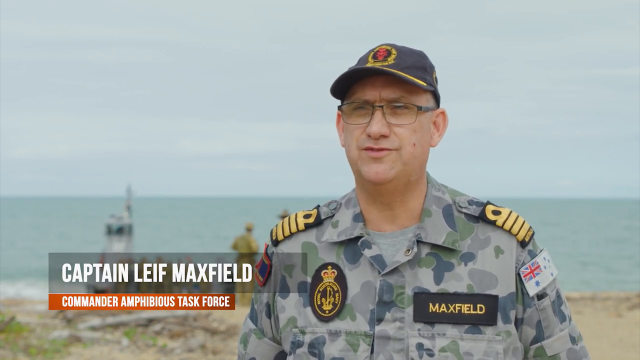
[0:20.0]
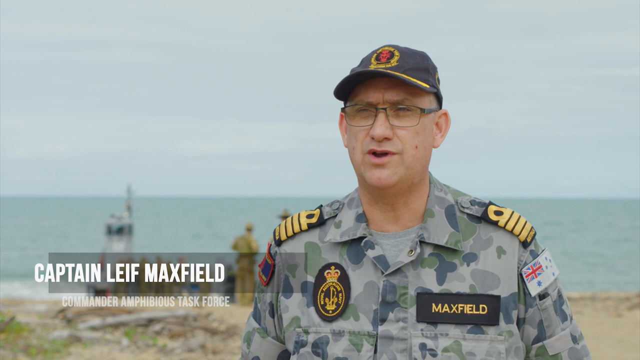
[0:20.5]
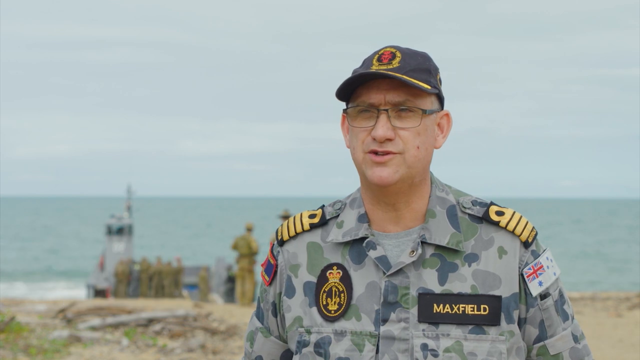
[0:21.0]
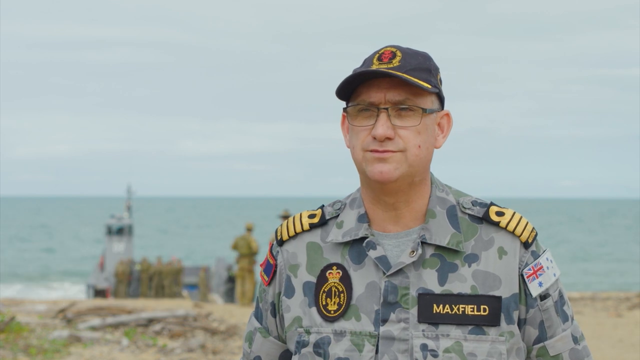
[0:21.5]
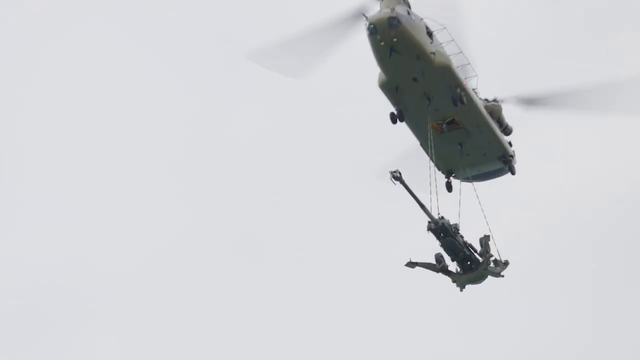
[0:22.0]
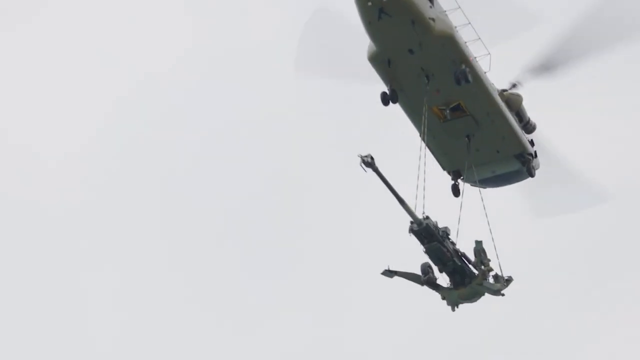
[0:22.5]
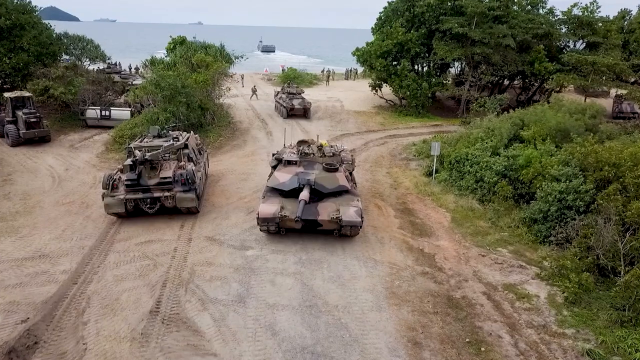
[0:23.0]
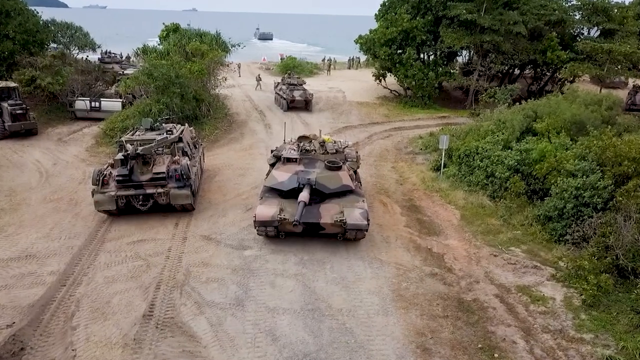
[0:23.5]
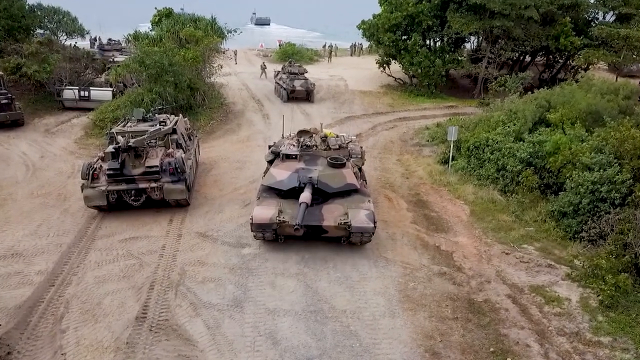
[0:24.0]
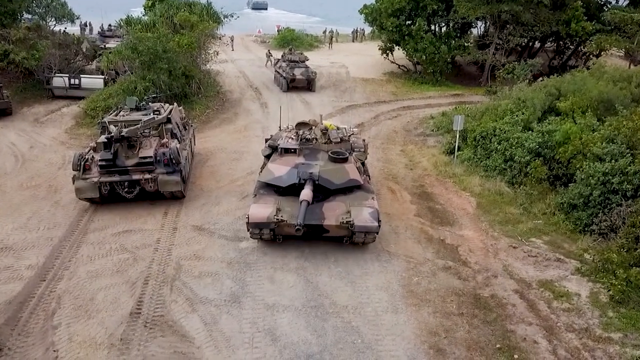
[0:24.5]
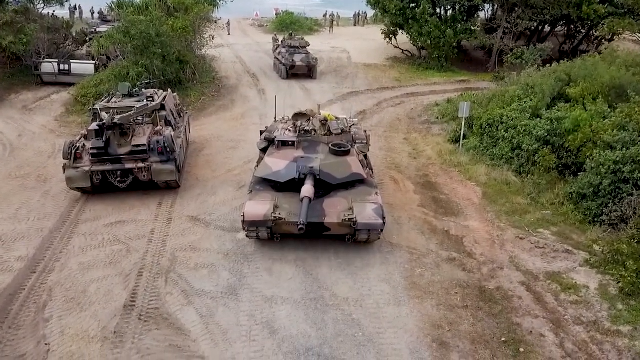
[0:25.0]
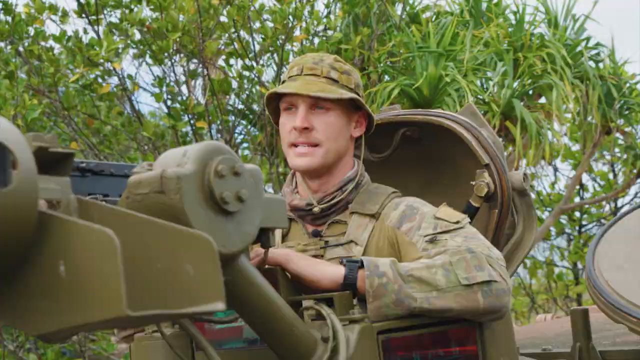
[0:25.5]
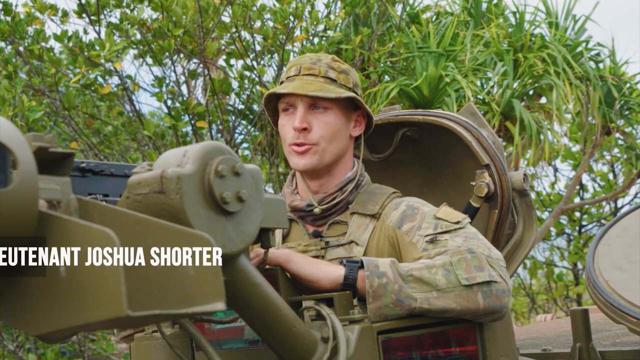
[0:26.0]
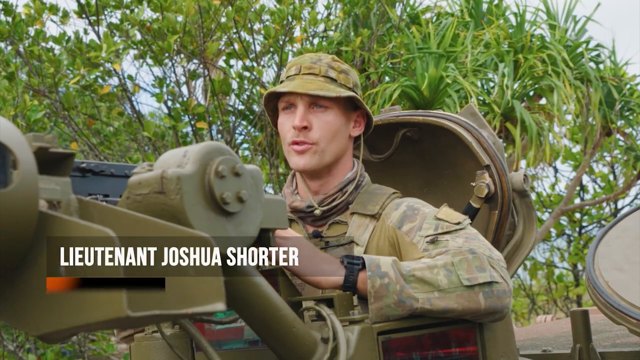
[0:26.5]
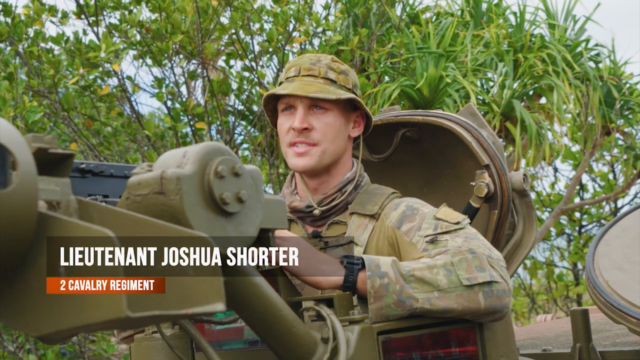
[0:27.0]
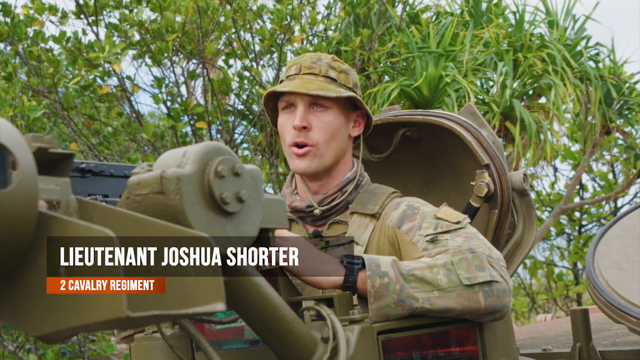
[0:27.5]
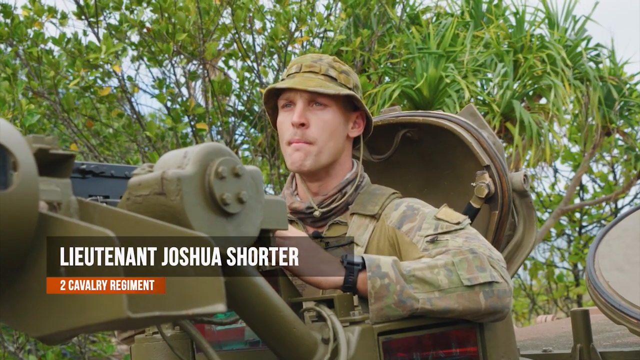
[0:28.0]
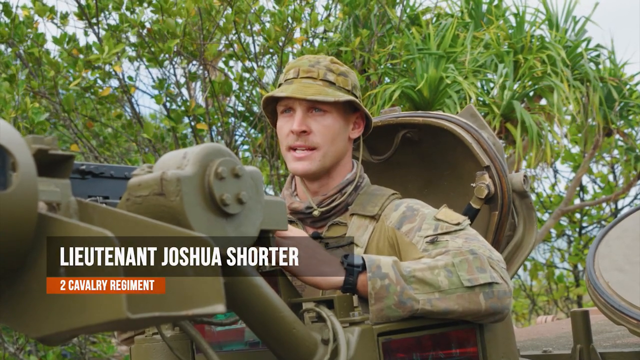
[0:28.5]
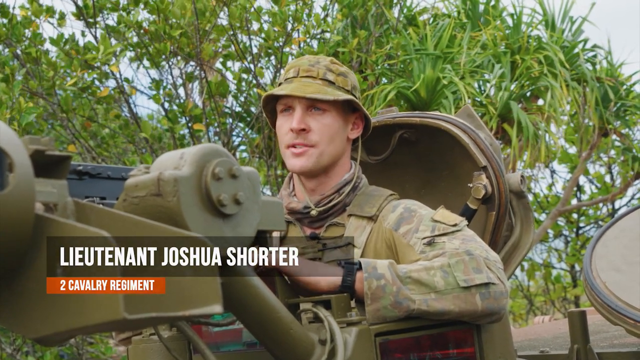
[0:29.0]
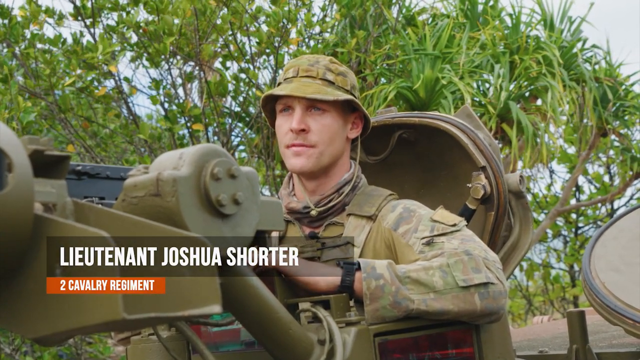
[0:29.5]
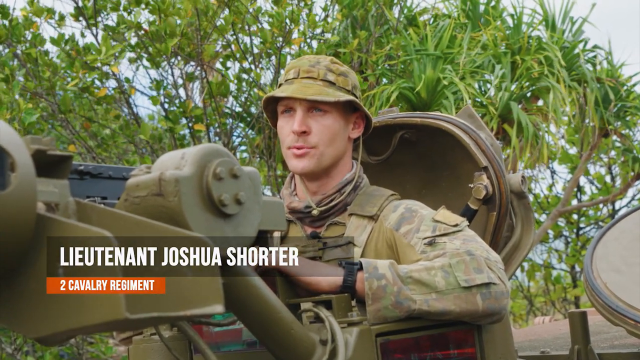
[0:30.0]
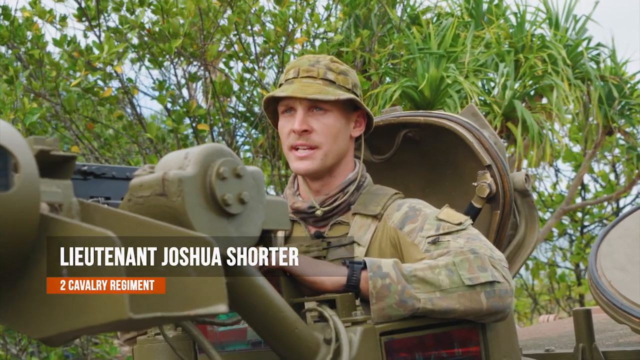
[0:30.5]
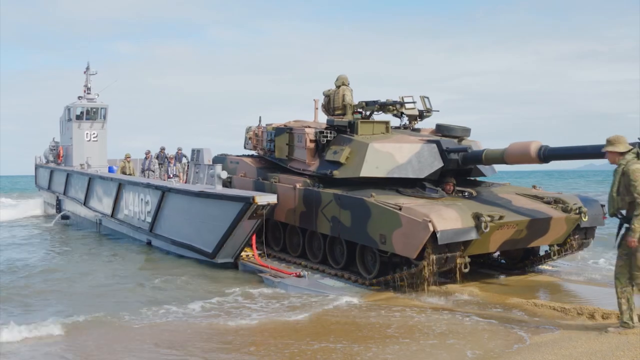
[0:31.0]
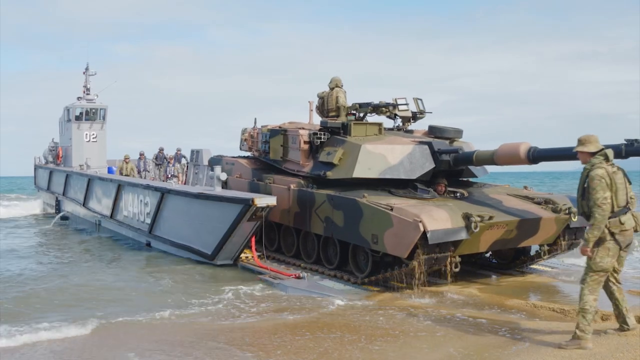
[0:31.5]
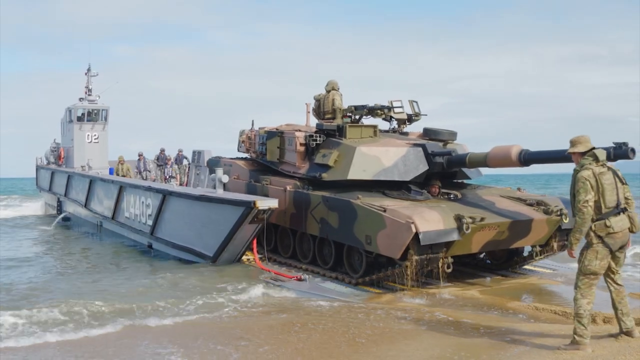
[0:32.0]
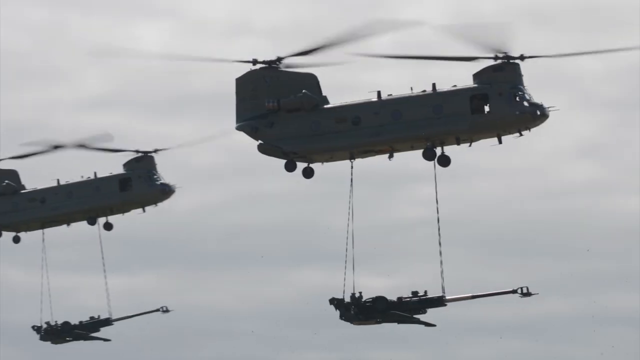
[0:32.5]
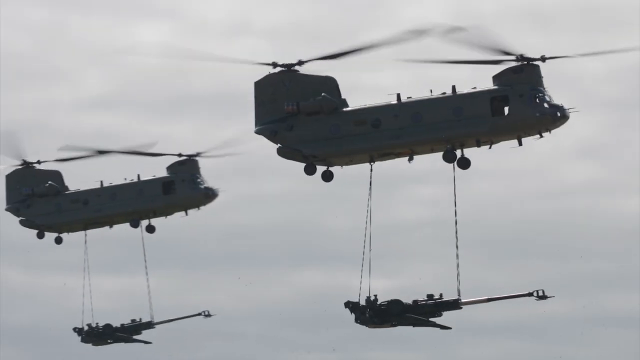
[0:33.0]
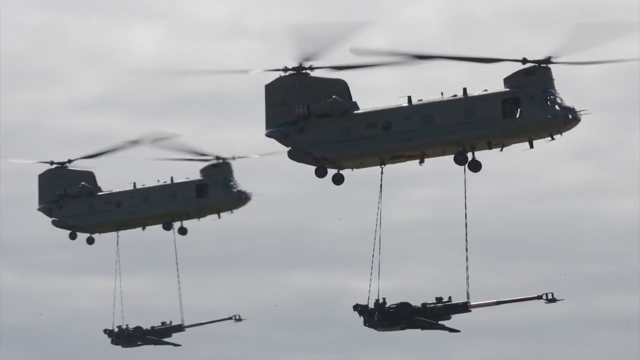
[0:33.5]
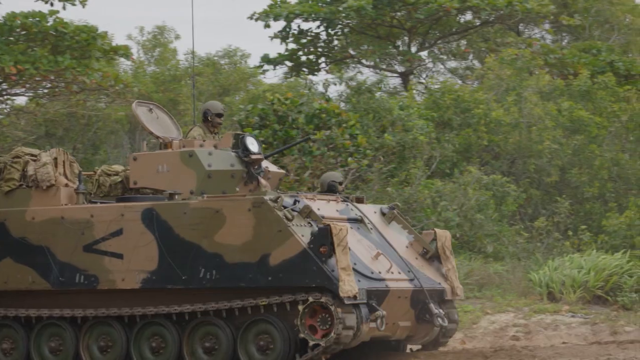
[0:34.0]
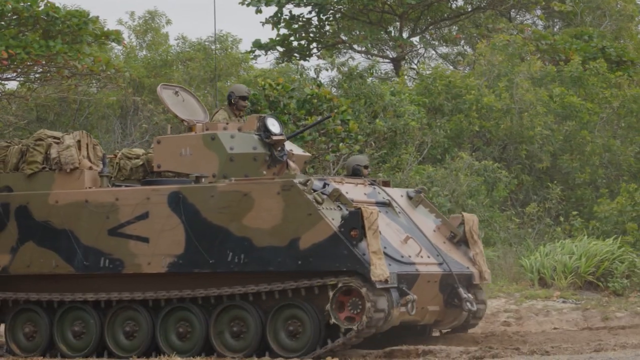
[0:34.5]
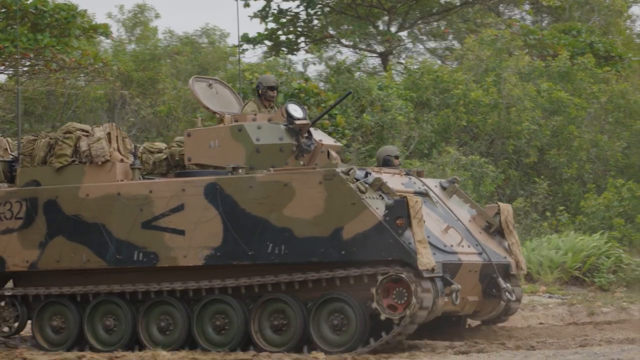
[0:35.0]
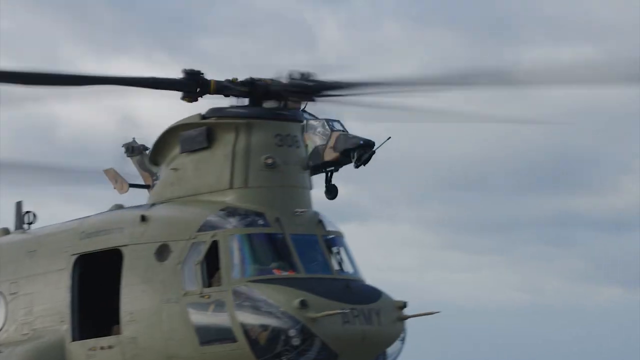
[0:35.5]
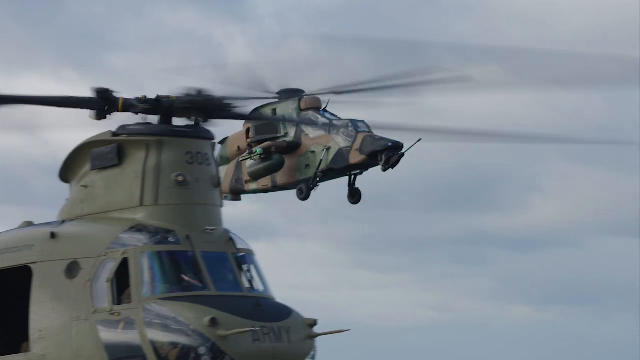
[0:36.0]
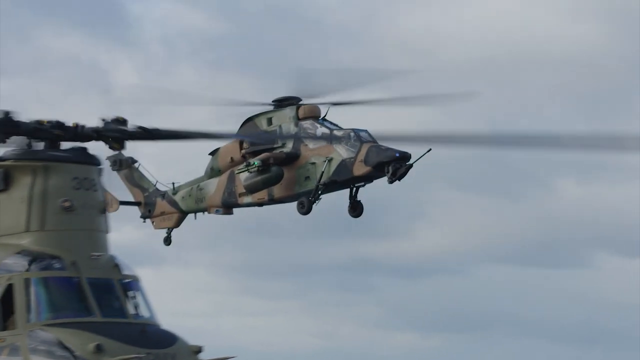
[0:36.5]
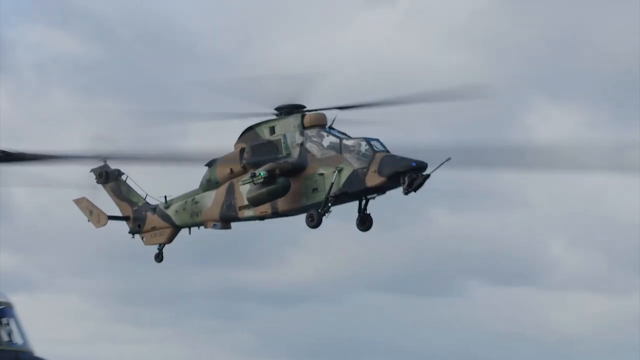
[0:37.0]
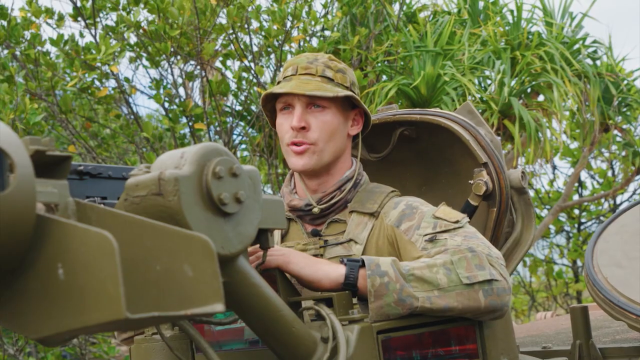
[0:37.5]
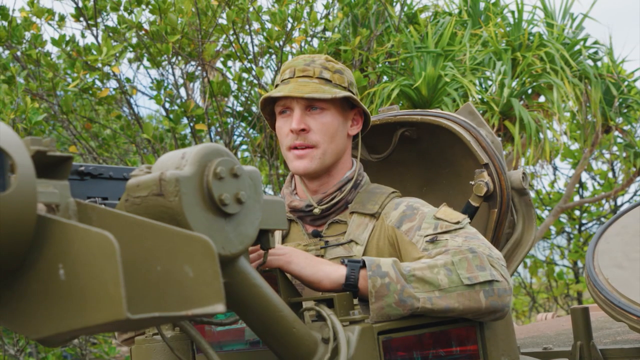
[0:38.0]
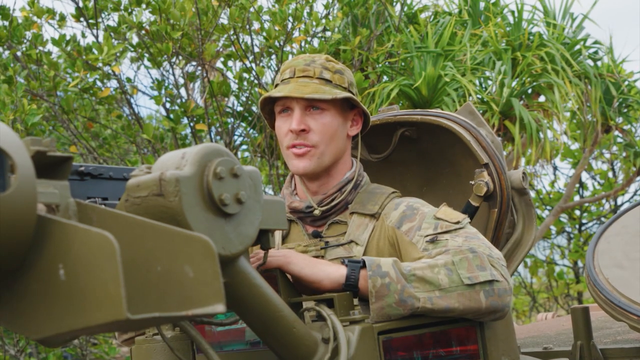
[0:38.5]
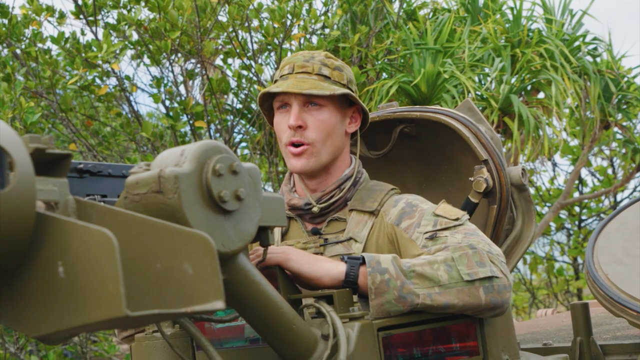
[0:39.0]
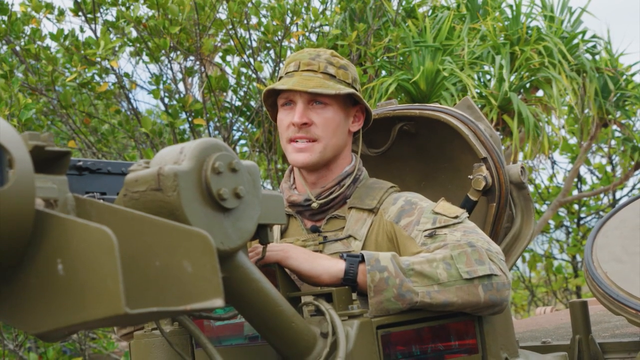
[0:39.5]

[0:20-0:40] Captain Maxfield, the commander of the Amphibious Task Force, wears a gray camouflage uniform with a logo on his right chest, lapels, and the name Maxfield on his left chest, plus a cap with a yellow, blue and red logo. He speaks to the camera. A helicopter then carries what looks like an assault weapon. Three army tanks, brown, green and black in color, come from the ocean onto the shore. An officer in a tank, Lieutenant Shorter from the 2 Cavalry Regiment, is shown wearing a bucket hat, an army uniform with an army vest, and a watch on his left hand; he stands in front of an assault rifle. A tanker then goes back onto the ship while two helicopters carrying assault rifles fly in the air. Another army tank moves, and multiple helicopters are shown.